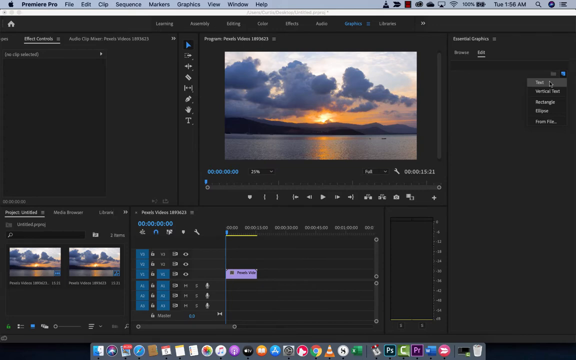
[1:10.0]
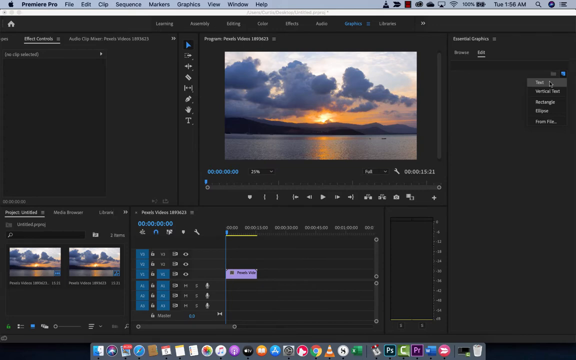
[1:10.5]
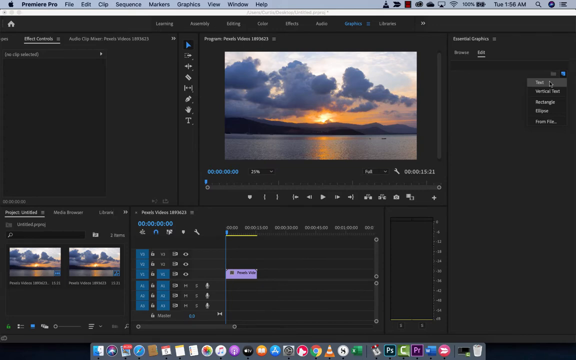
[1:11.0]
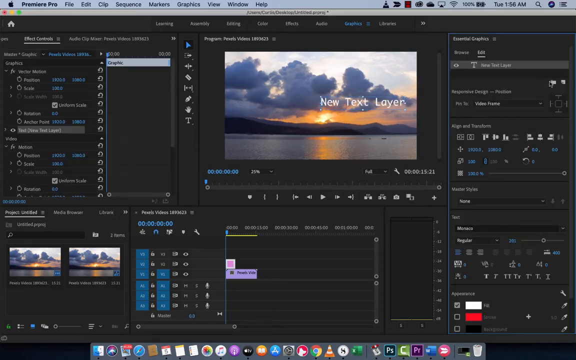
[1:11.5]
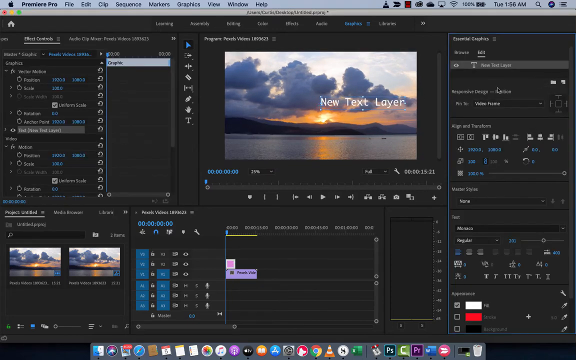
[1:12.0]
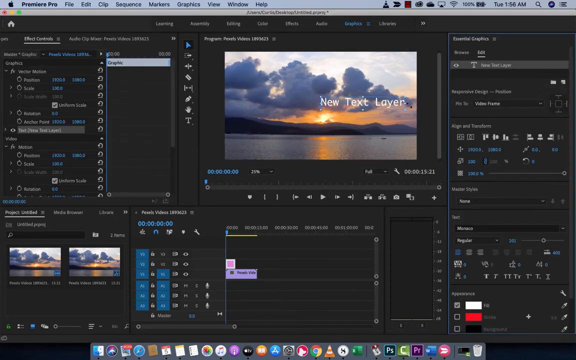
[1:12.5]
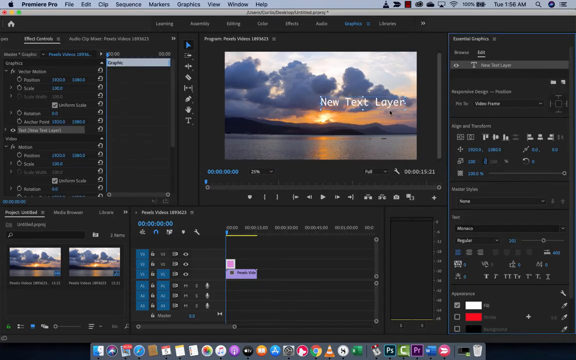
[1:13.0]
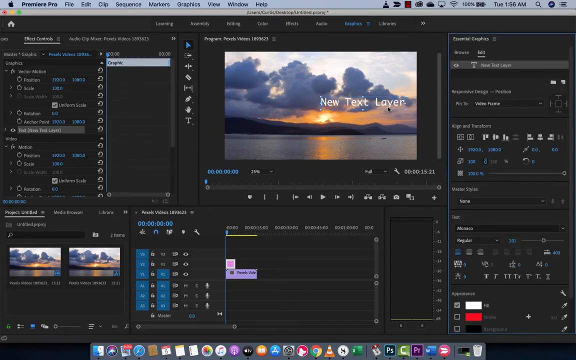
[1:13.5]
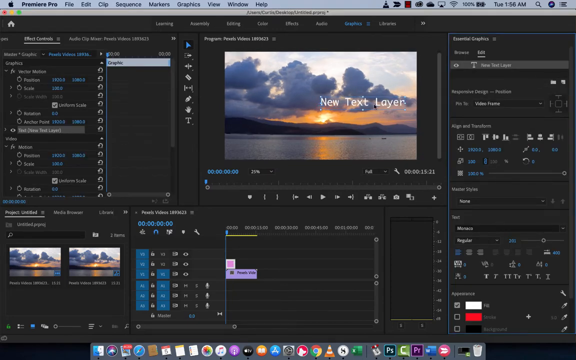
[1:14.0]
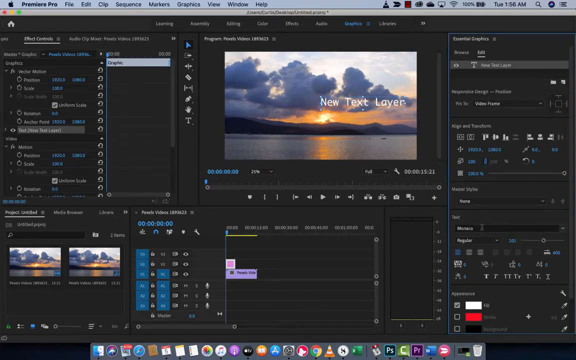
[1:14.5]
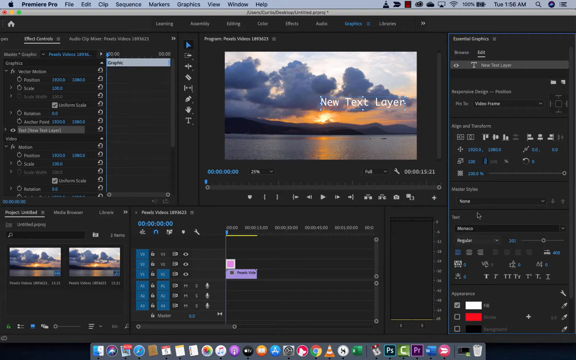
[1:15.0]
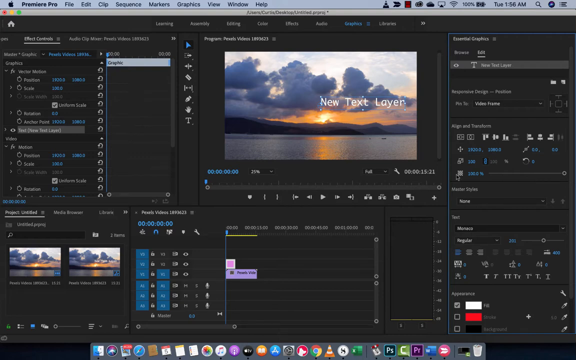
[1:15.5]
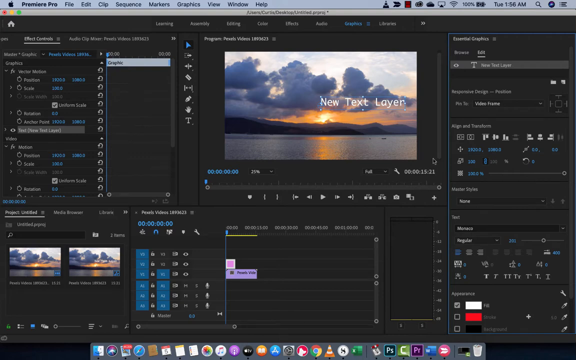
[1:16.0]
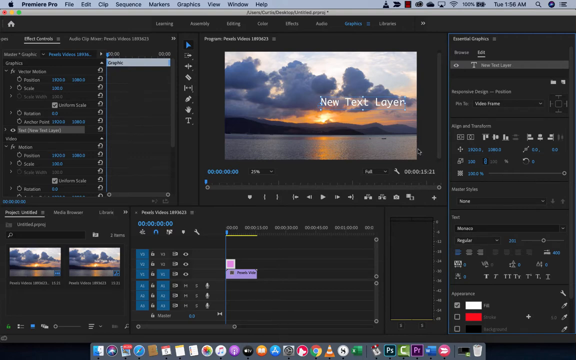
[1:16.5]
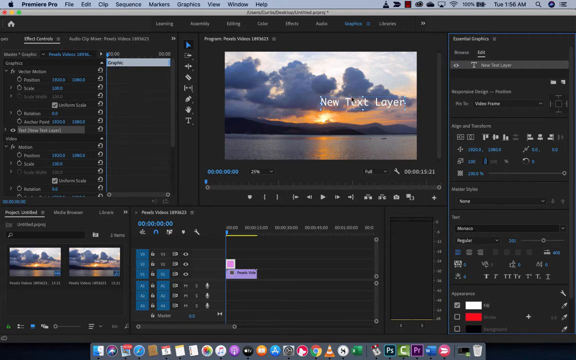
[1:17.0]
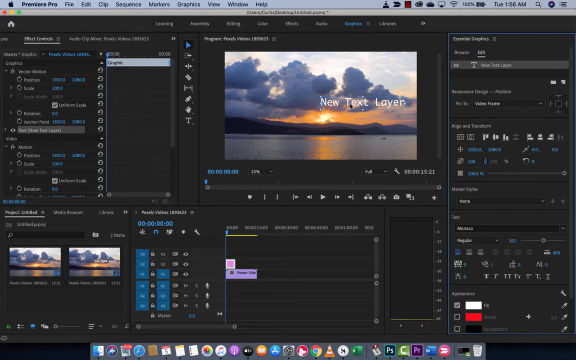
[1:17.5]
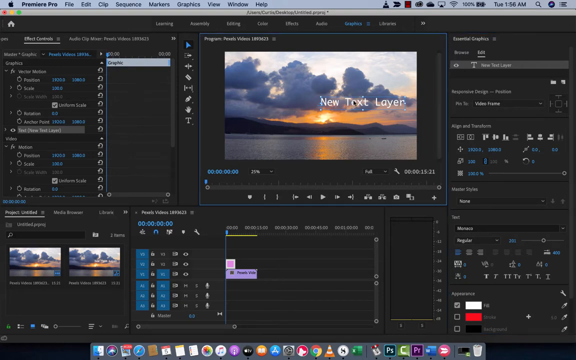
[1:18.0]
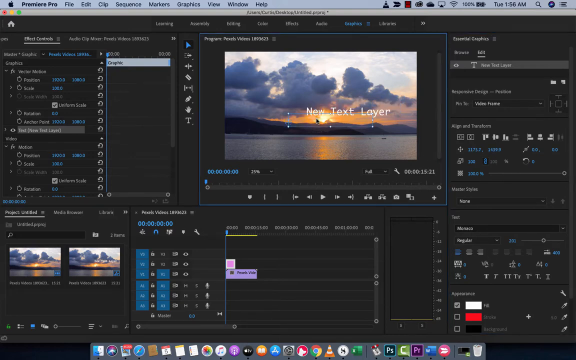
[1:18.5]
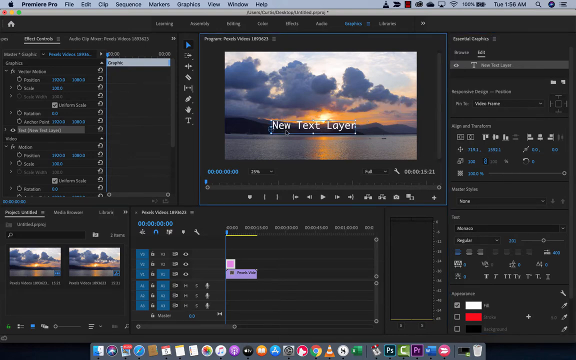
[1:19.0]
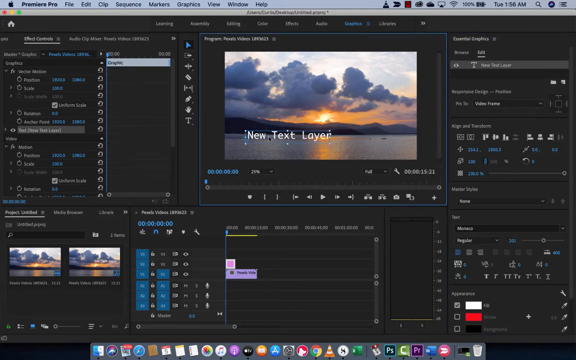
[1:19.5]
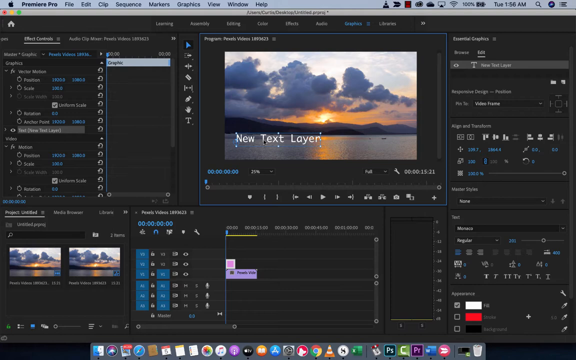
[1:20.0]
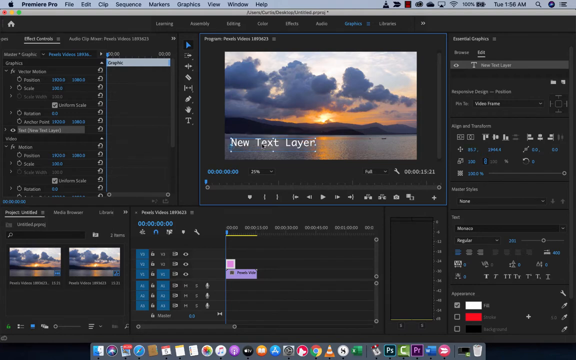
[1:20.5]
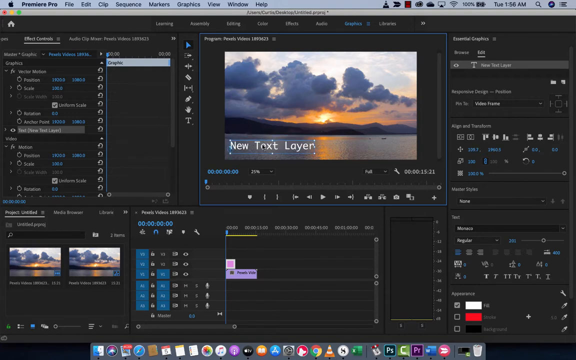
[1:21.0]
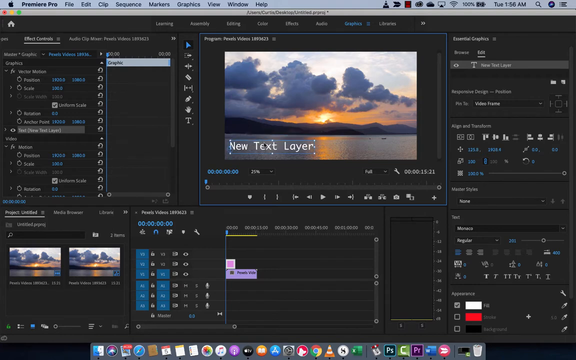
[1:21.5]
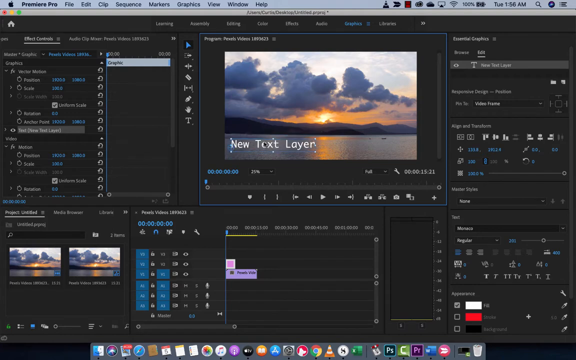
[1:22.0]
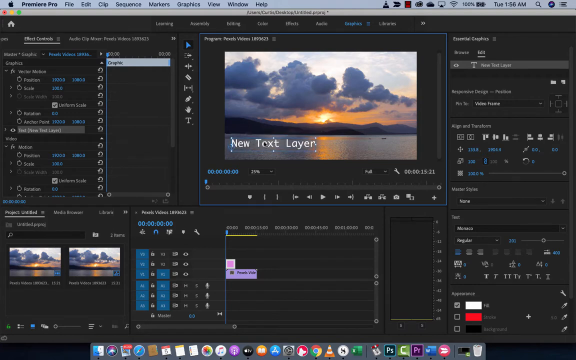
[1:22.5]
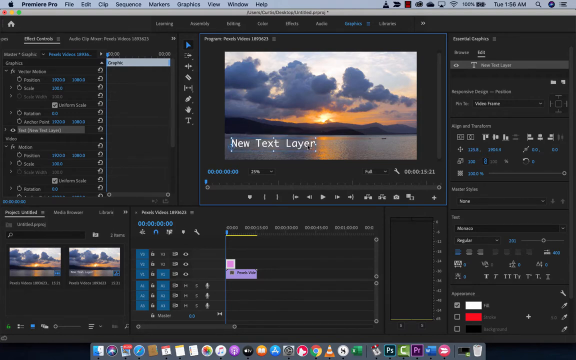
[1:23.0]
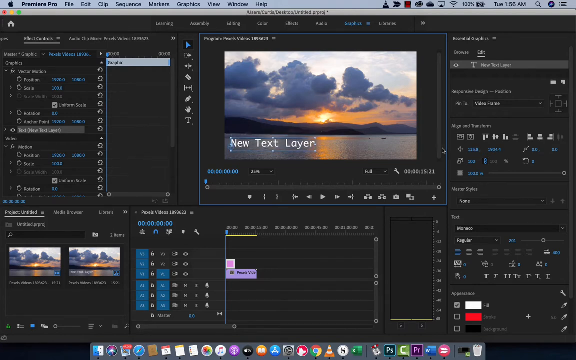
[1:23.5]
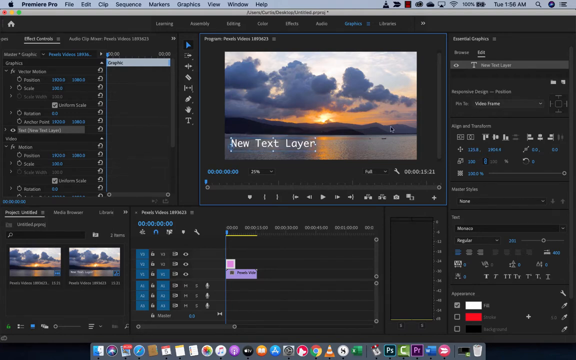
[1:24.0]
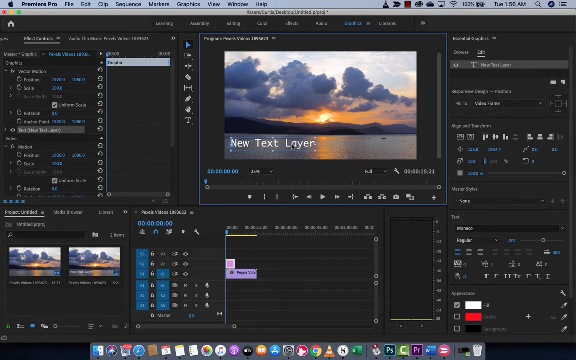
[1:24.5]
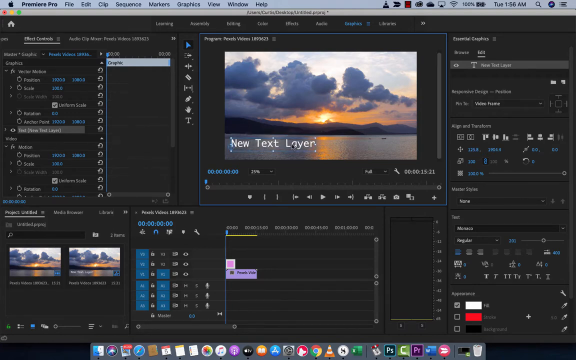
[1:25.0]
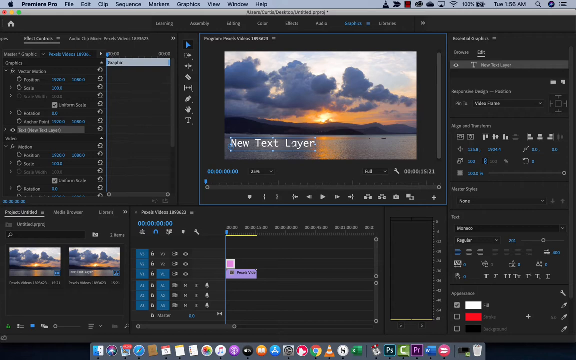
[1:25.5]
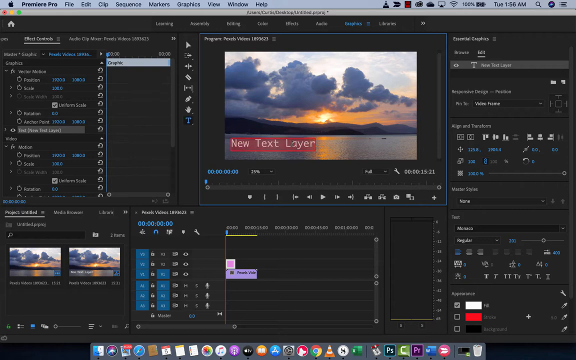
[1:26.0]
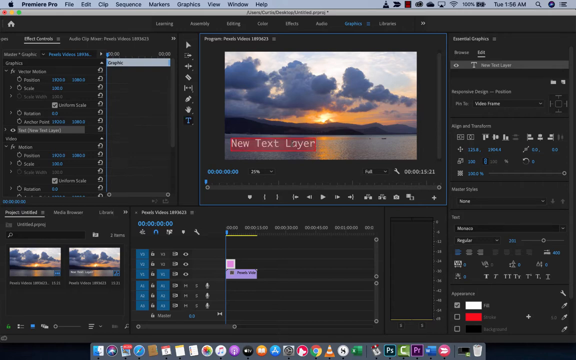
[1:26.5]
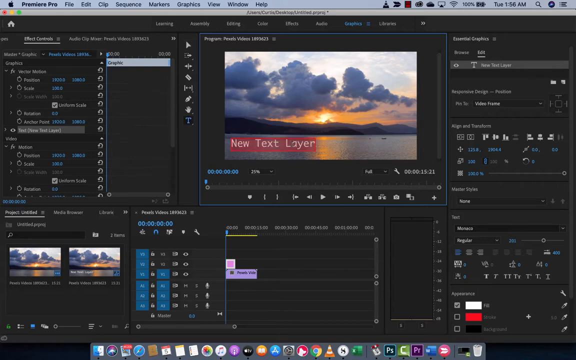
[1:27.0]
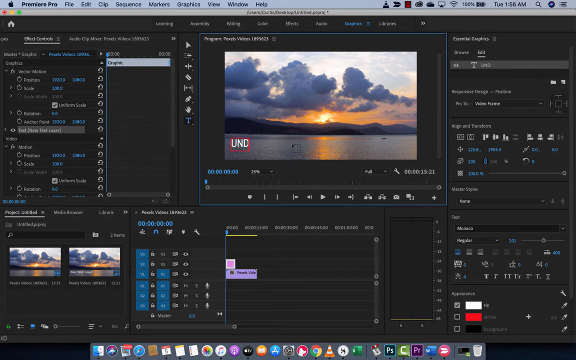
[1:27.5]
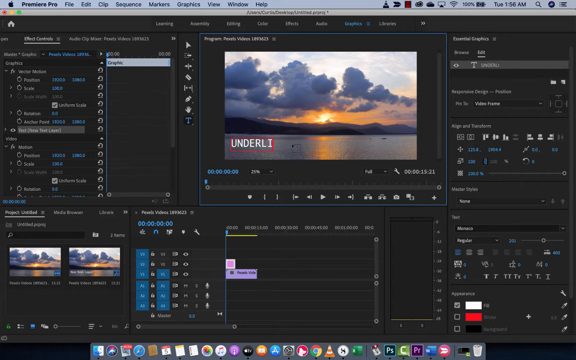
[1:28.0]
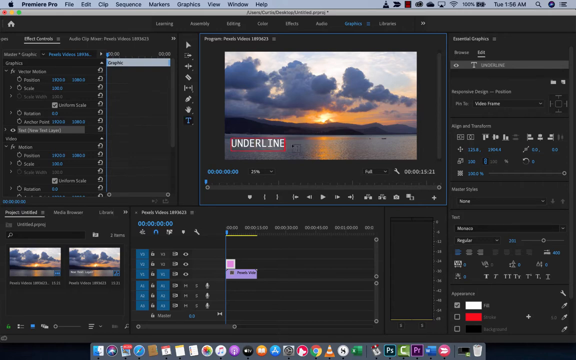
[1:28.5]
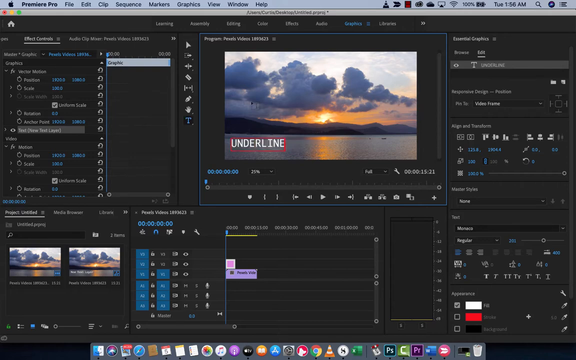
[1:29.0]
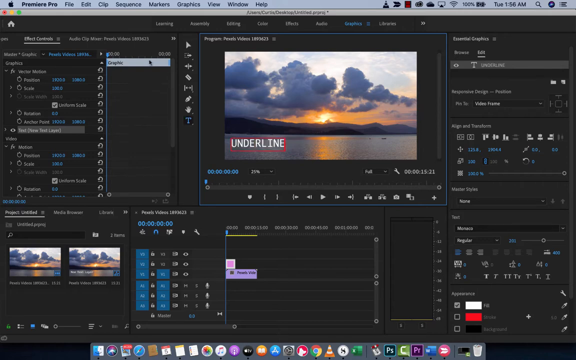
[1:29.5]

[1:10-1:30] "Premiere Pro" appears at the top, with different editing tools on the screen. The primary thing on screen is three sets of the same image of a sunset, with clouds in the sky and water. On the right-hand side are a black mouse cursor and an open square box with its top option highlighted. After a click, the box disappears and the right side fills with new options, and new options appear everywhere as the mouse moves. The cursor goes to the main image, right where it says "New Text Layer", then goes to the right and back to the image. It clicks and drags that further down into the image to the bottom left and leaves it there. It then highlights it and changes the text to "underline". The cursor goes up and to the left and clicks a little icon at the top left that looks like some kind of pointer tool.